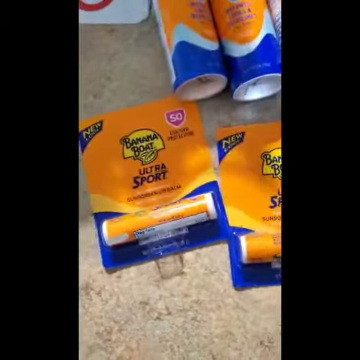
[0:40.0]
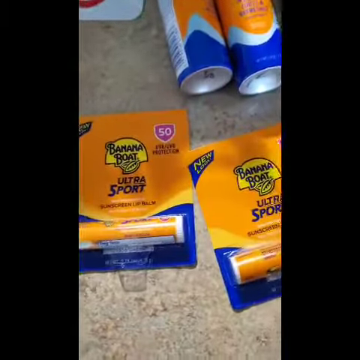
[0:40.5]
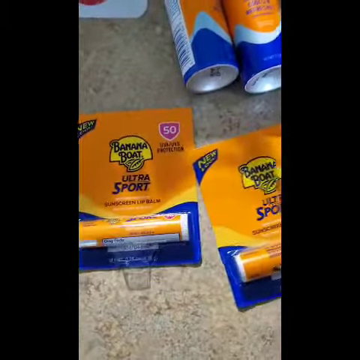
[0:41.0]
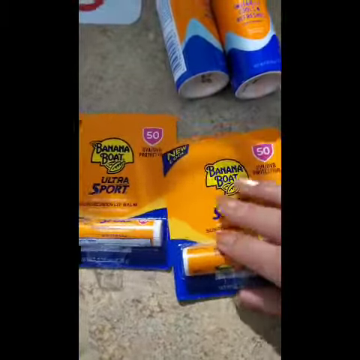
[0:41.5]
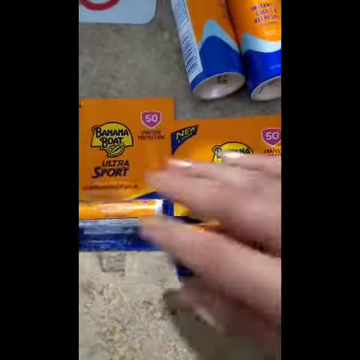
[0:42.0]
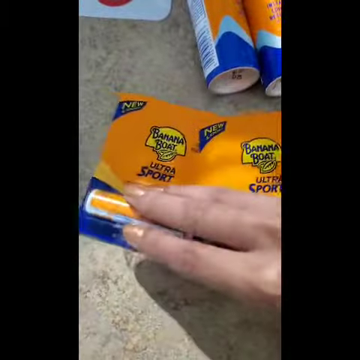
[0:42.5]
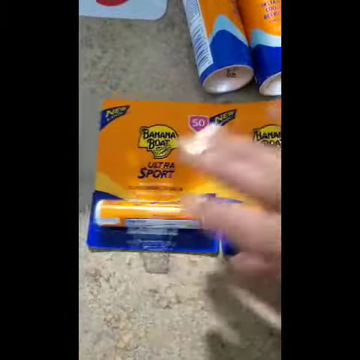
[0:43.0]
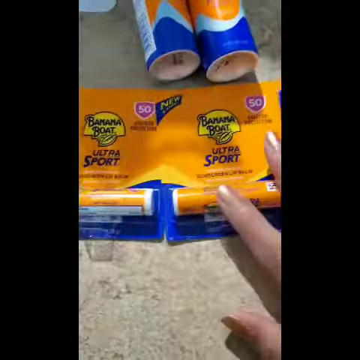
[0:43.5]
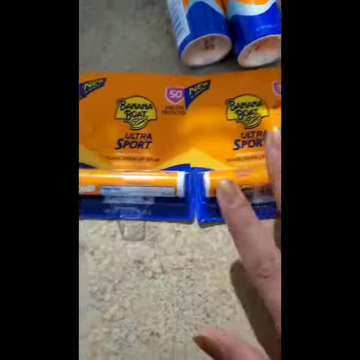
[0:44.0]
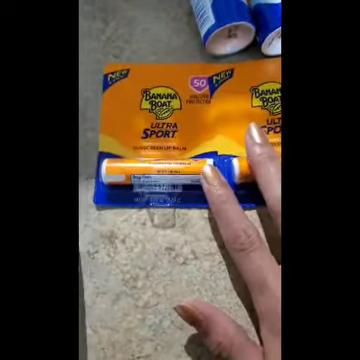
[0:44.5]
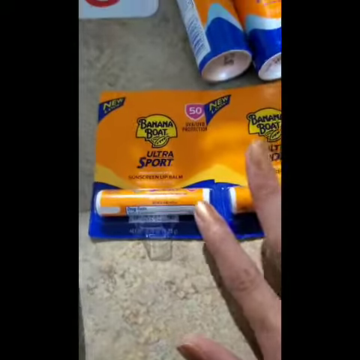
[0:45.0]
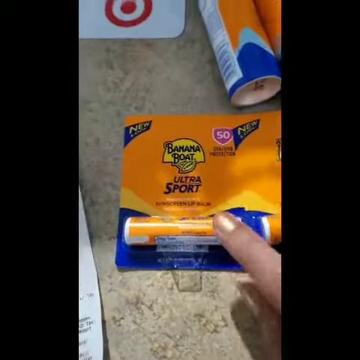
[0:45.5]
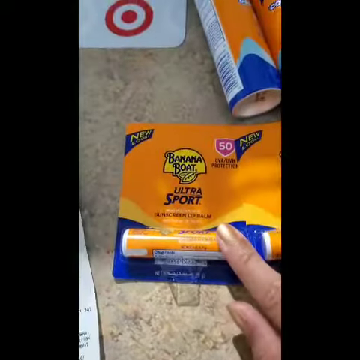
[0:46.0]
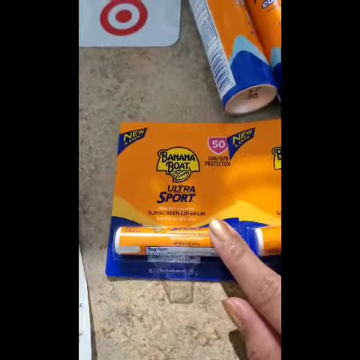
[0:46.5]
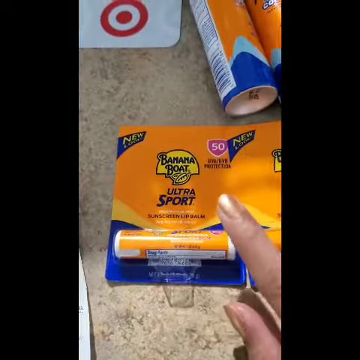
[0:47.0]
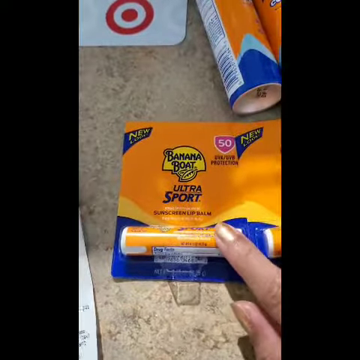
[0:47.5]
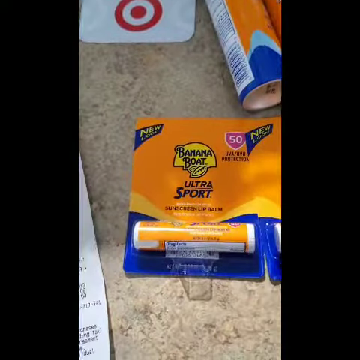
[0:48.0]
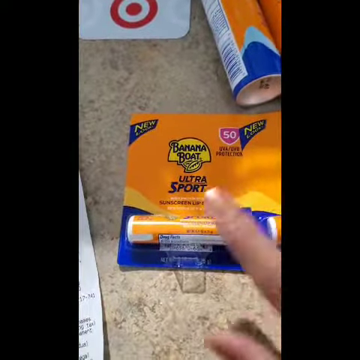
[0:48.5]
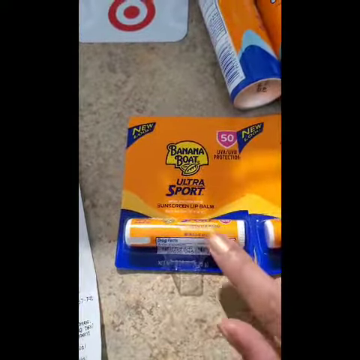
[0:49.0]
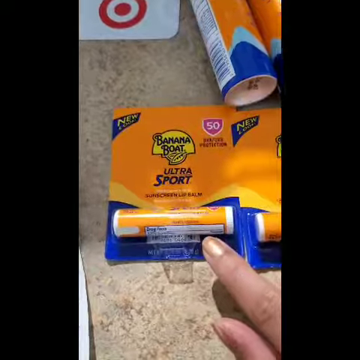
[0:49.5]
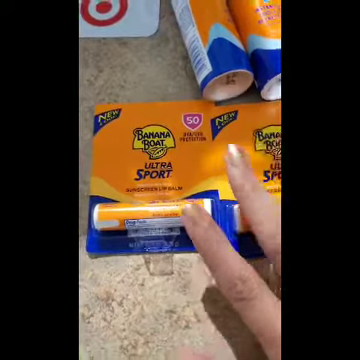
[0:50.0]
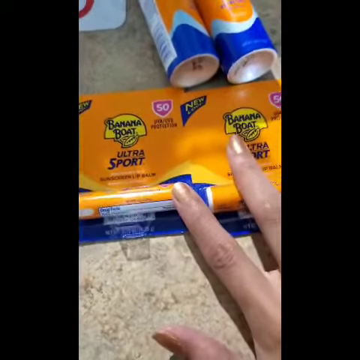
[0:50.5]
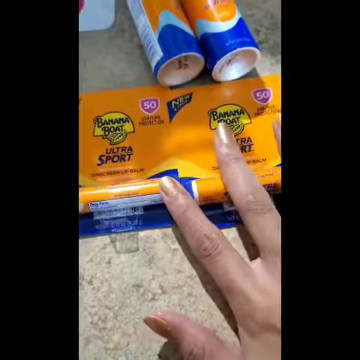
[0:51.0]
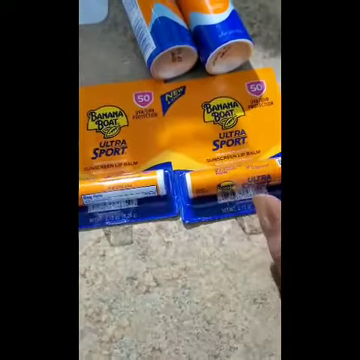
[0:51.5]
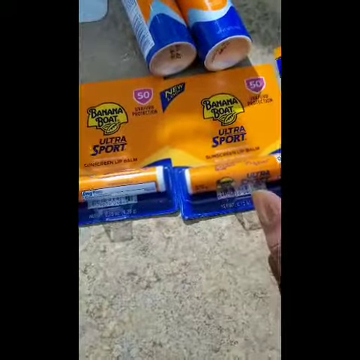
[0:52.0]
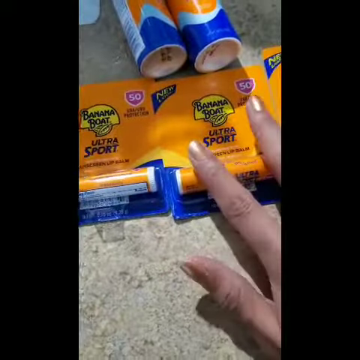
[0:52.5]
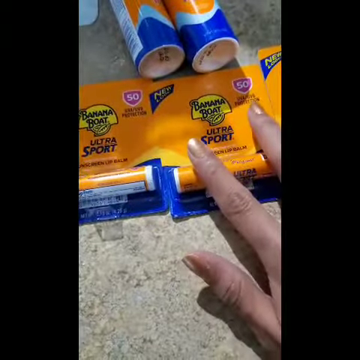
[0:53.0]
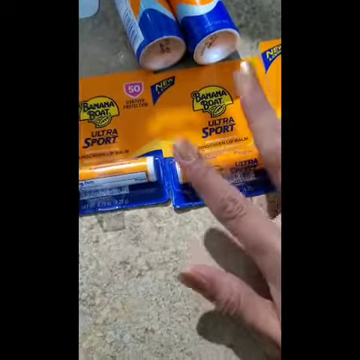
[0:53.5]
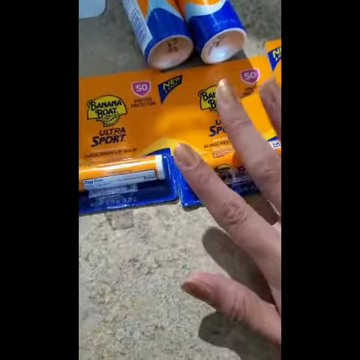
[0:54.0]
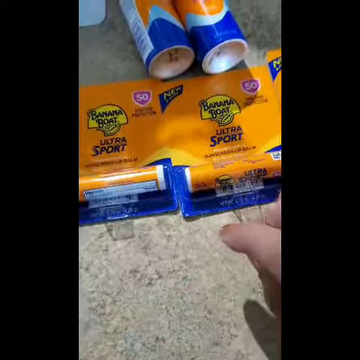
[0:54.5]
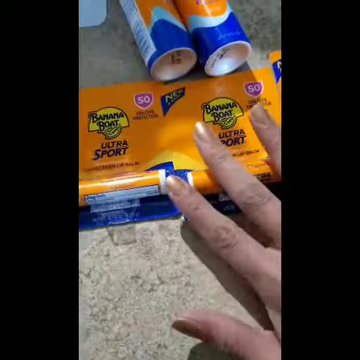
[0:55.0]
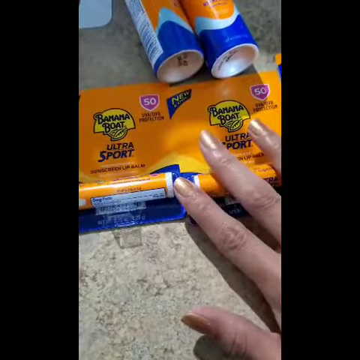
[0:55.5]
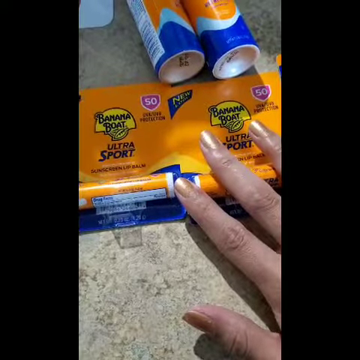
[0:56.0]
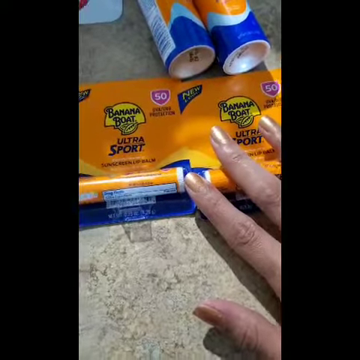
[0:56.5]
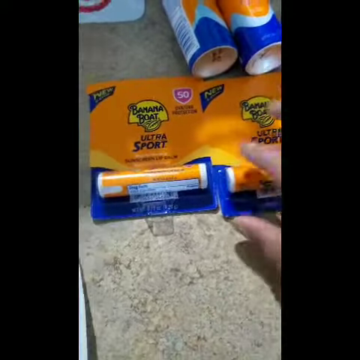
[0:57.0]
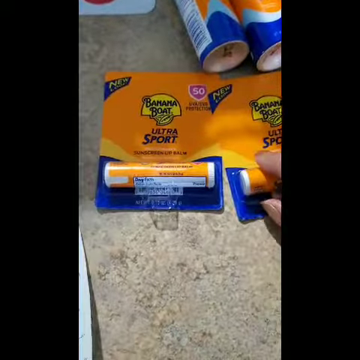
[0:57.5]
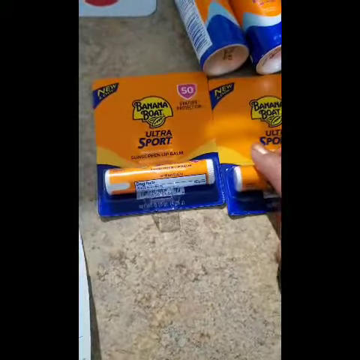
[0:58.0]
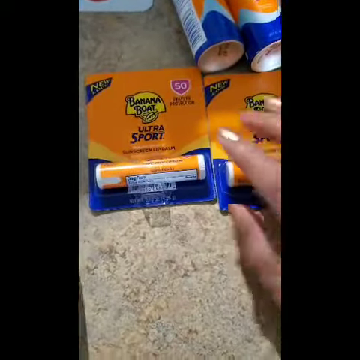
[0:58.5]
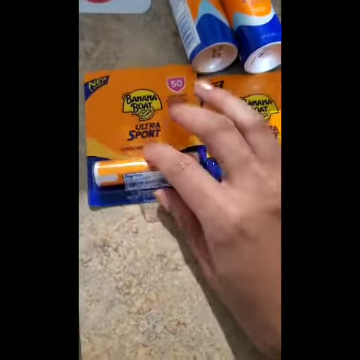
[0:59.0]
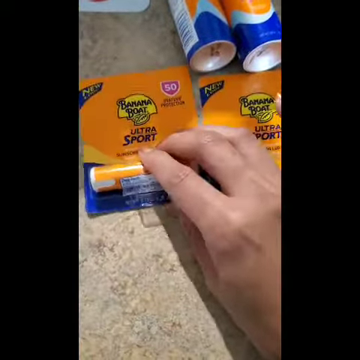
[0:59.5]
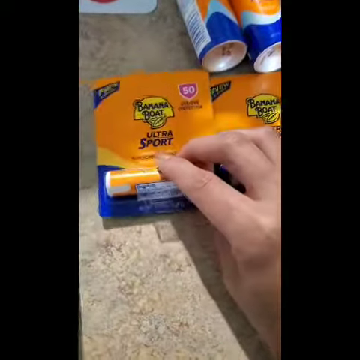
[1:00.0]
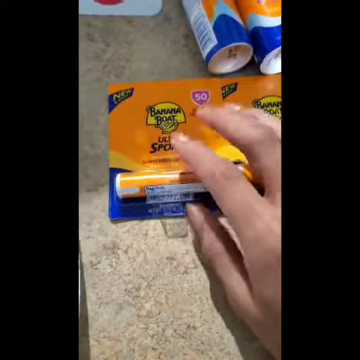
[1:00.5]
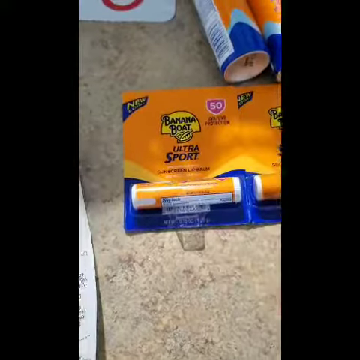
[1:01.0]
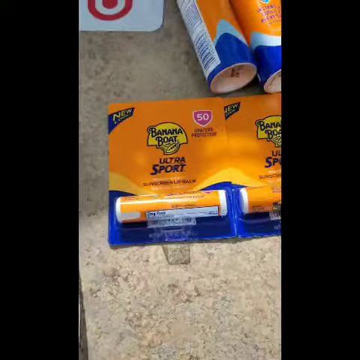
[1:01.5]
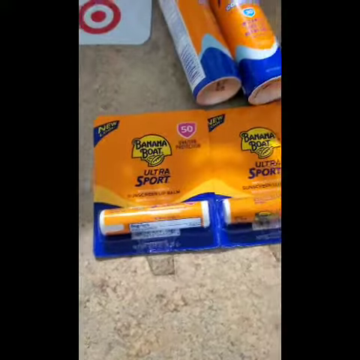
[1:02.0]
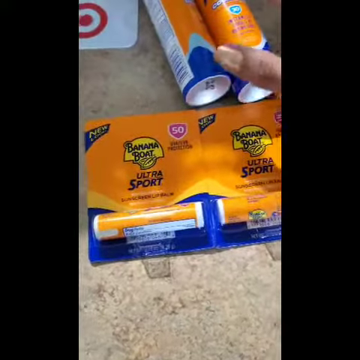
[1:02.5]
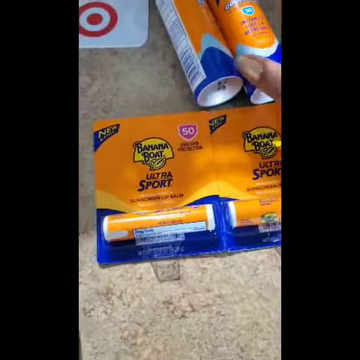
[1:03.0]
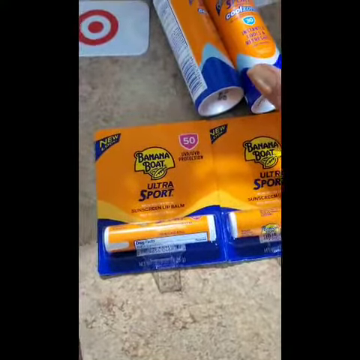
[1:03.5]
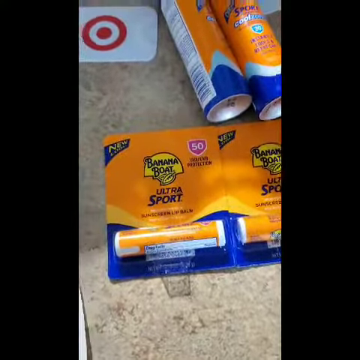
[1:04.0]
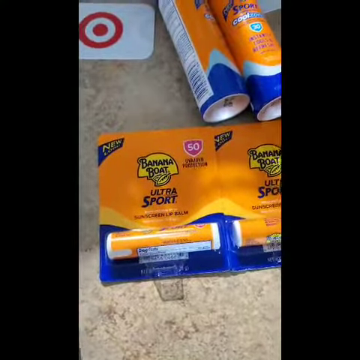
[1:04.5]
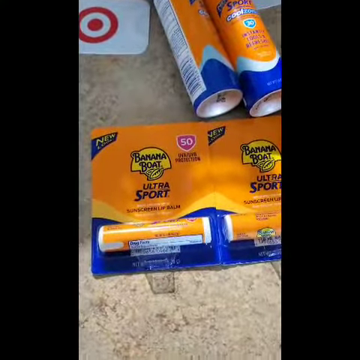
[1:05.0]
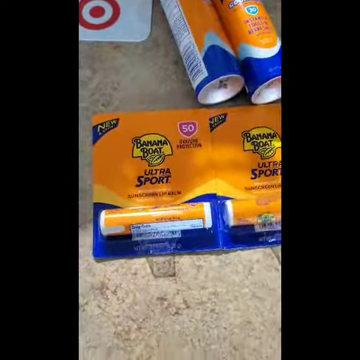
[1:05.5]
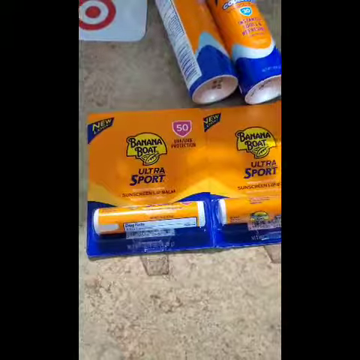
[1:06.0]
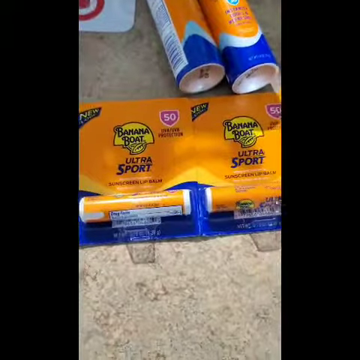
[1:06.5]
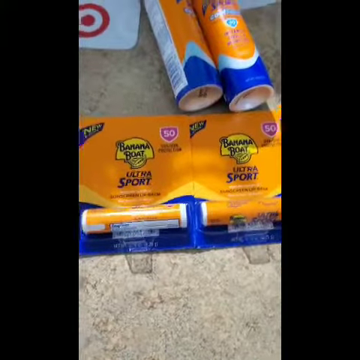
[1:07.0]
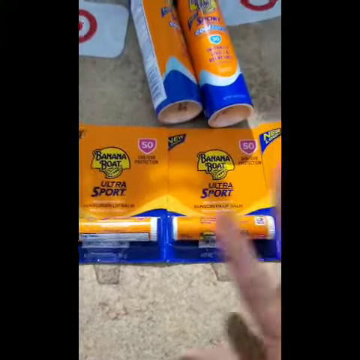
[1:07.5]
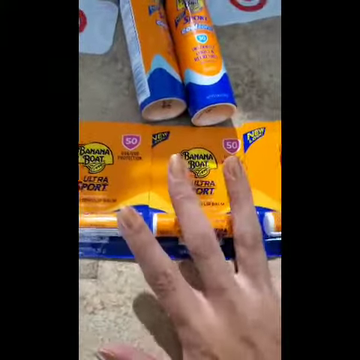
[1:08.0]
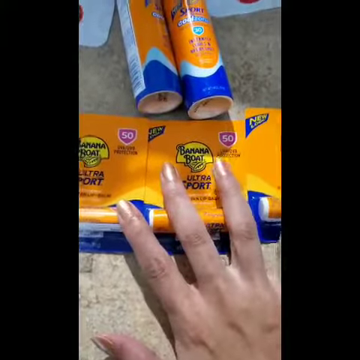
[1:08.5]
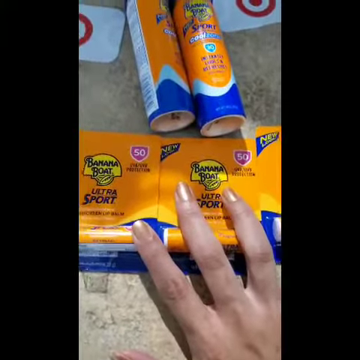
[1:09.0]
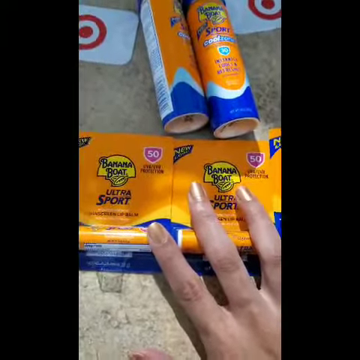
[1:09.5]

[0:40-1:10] A hand moves the sunscreen lip balms around. Two sunscreen lip balms are on the screen, both still in their orange, yellow and blue packaging. Above them are two aerosol cans and a small Target card that is likely a gift card. The hand of the person filming has gold nail polish on its fingernails and points at the lip balms repeatedly: at one, then at another, then back to the other, which it picks up a little. As the video progresses, three lip balms are still there. These are Banana Boat Ultra Sport sunscreen lip balms. All the products are on top of what appears to be a beige countertop. The lip balm packaging says "new," meaning they are likely a new product, and they appear to be SPF 50, as there is a big symbol in the corner with 50 written on it.